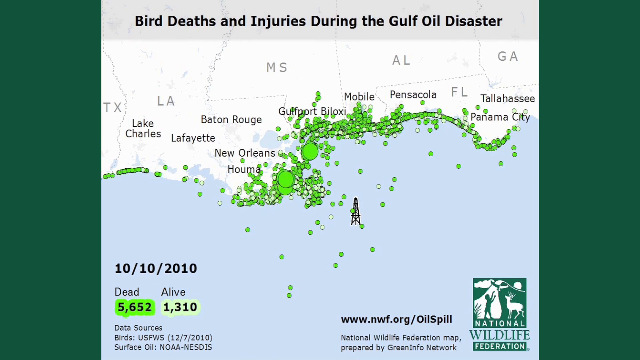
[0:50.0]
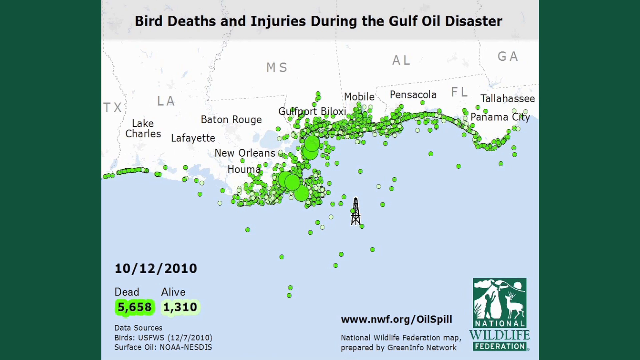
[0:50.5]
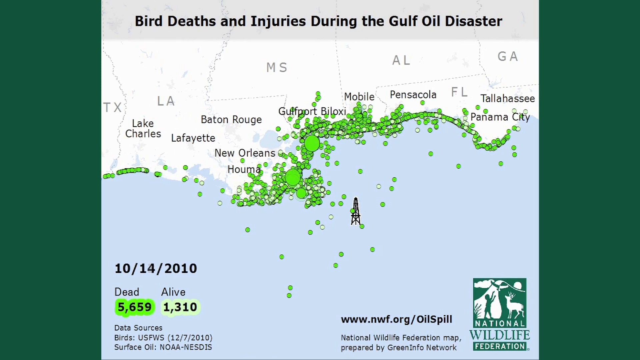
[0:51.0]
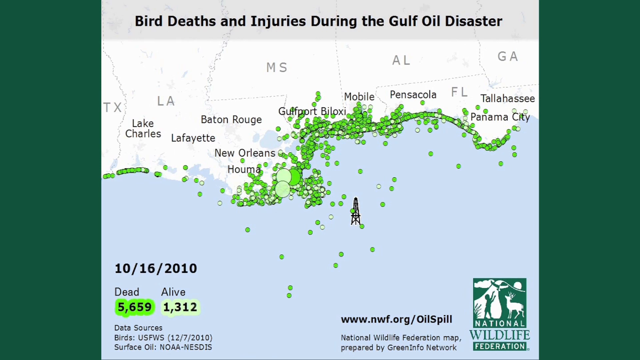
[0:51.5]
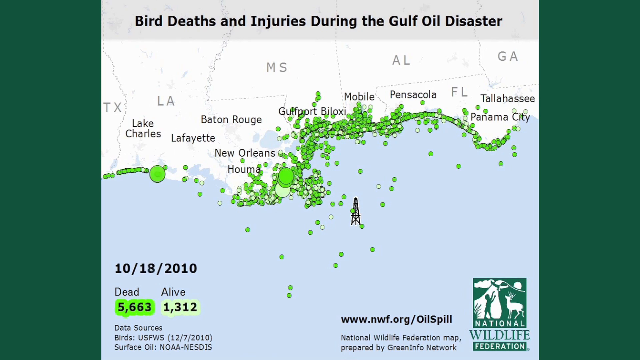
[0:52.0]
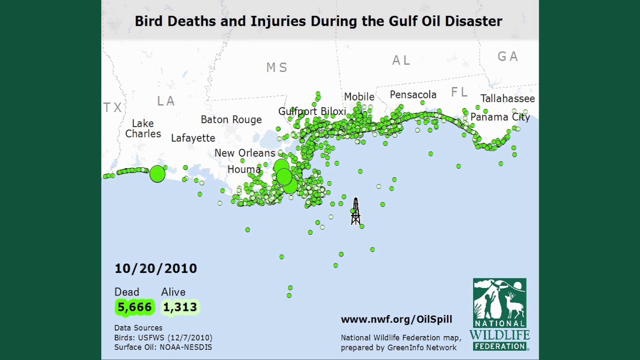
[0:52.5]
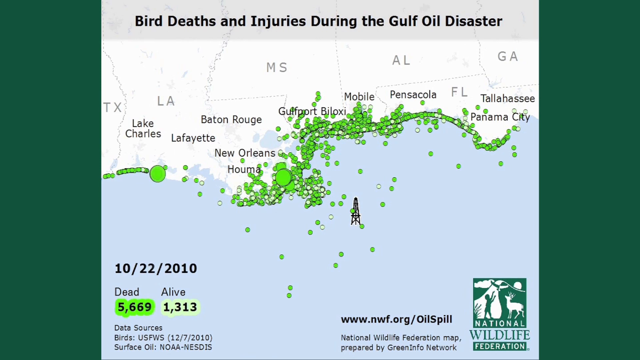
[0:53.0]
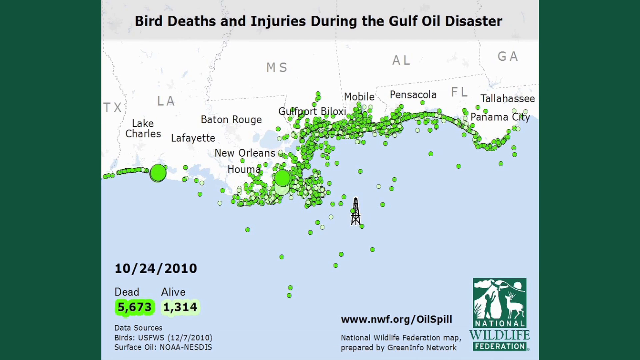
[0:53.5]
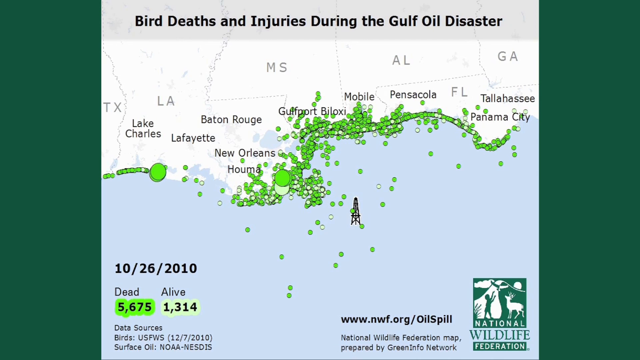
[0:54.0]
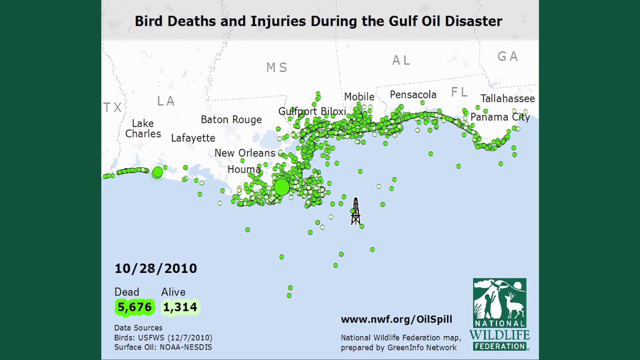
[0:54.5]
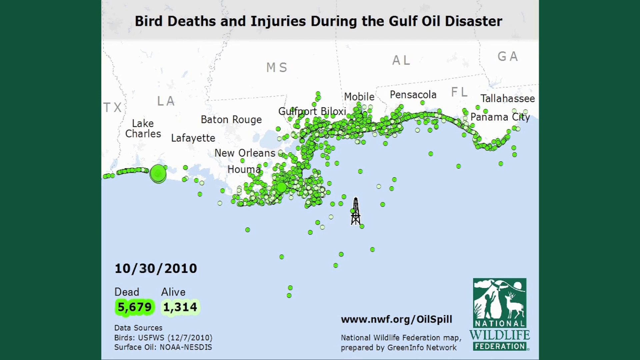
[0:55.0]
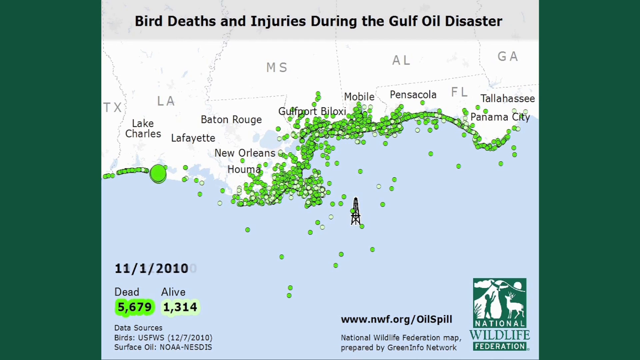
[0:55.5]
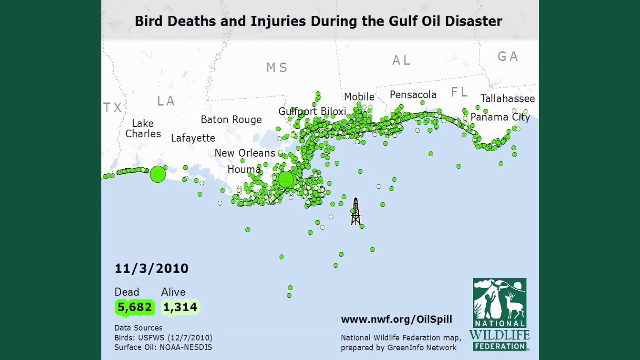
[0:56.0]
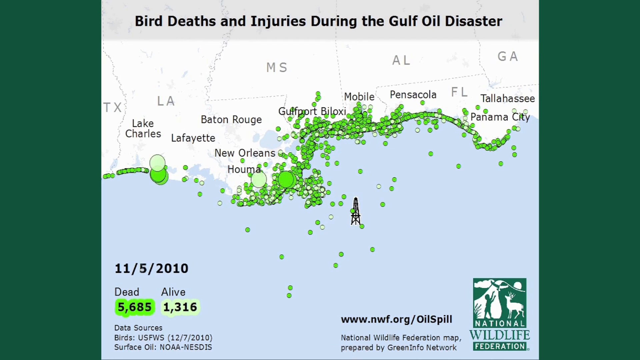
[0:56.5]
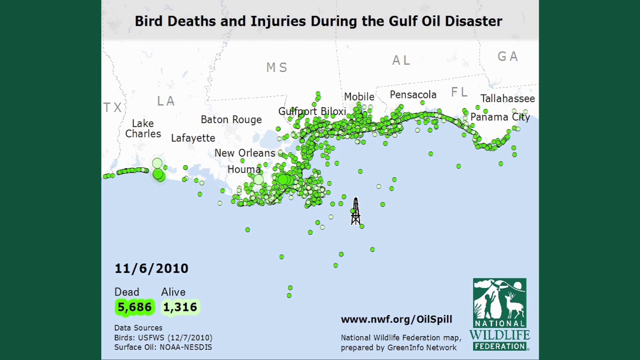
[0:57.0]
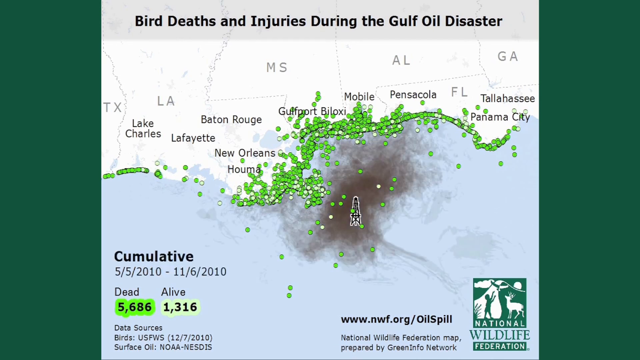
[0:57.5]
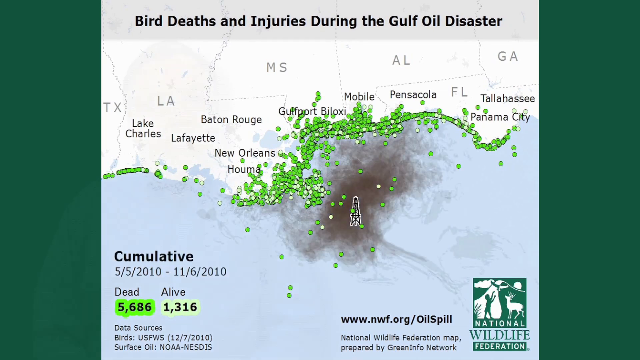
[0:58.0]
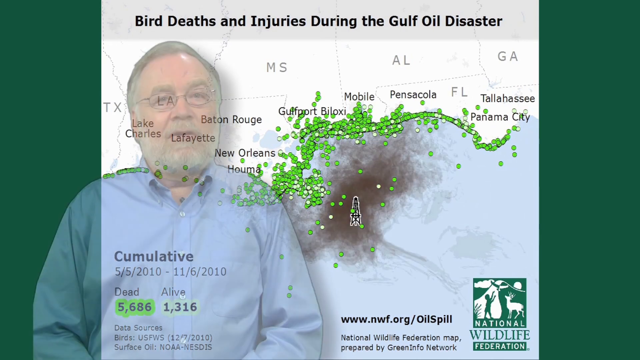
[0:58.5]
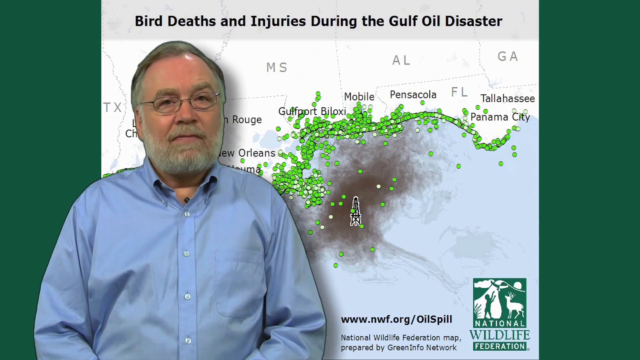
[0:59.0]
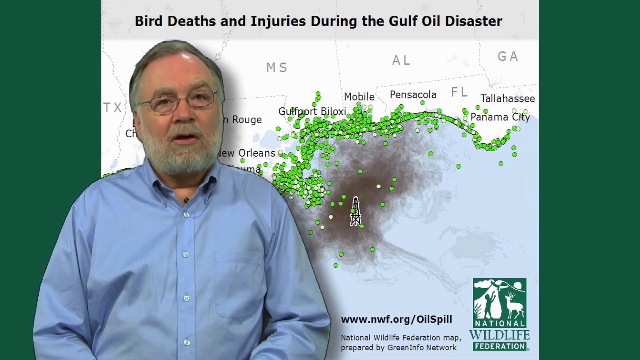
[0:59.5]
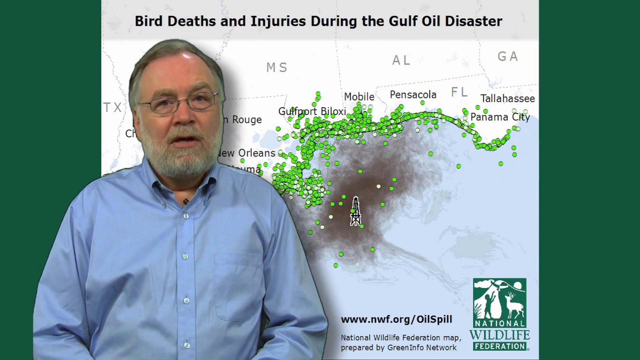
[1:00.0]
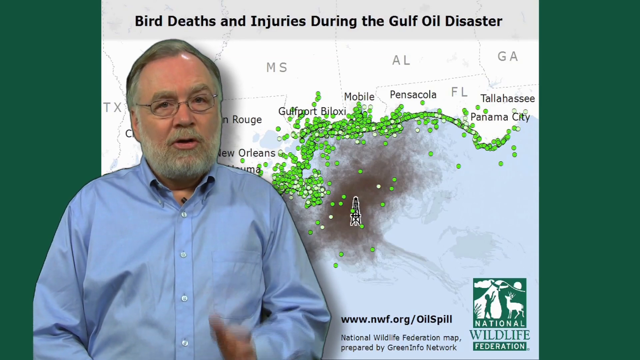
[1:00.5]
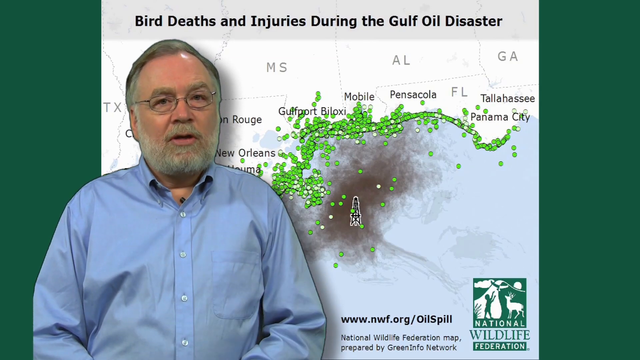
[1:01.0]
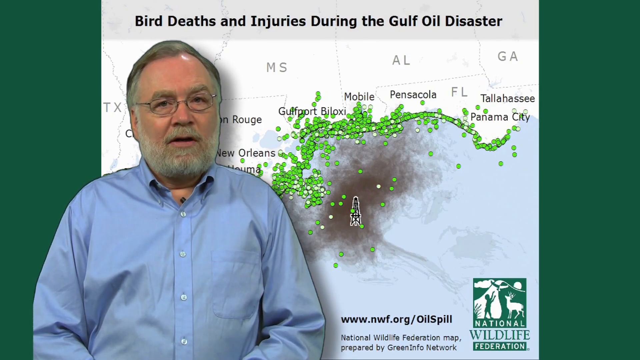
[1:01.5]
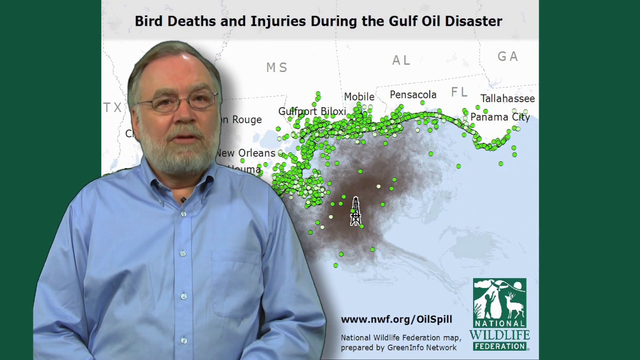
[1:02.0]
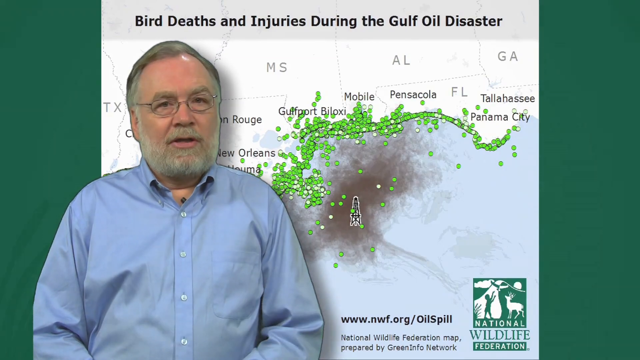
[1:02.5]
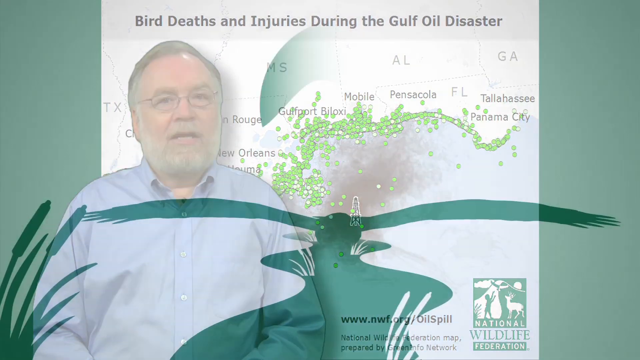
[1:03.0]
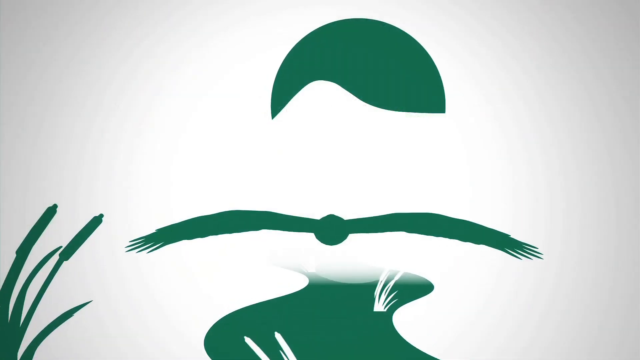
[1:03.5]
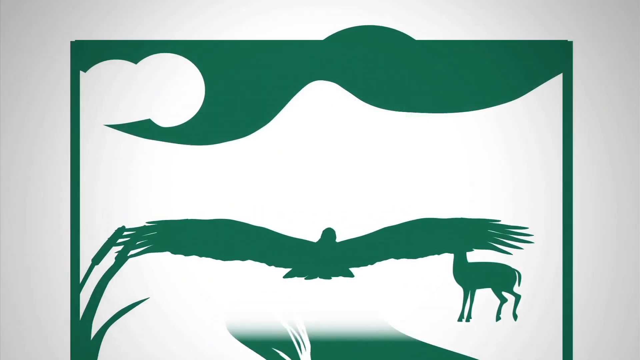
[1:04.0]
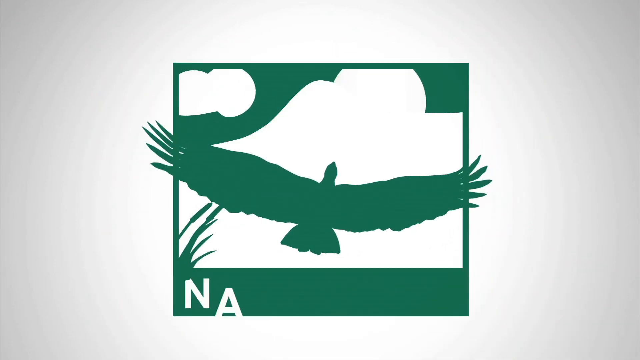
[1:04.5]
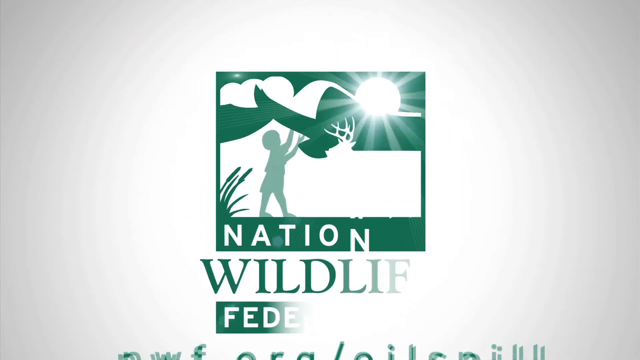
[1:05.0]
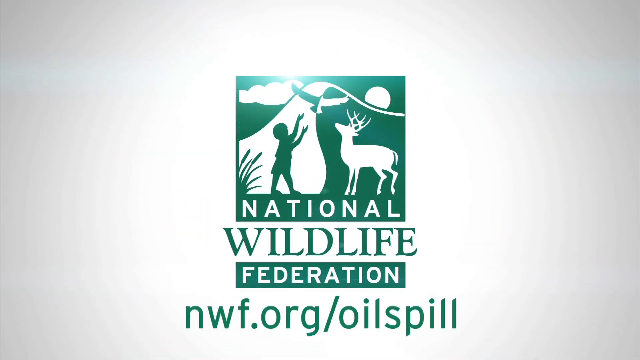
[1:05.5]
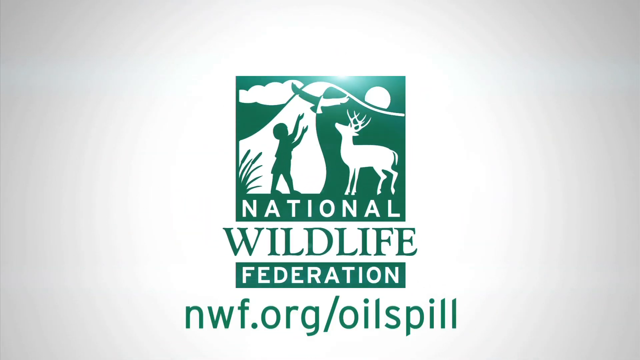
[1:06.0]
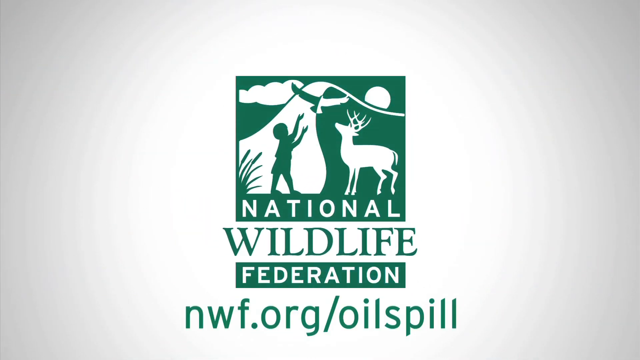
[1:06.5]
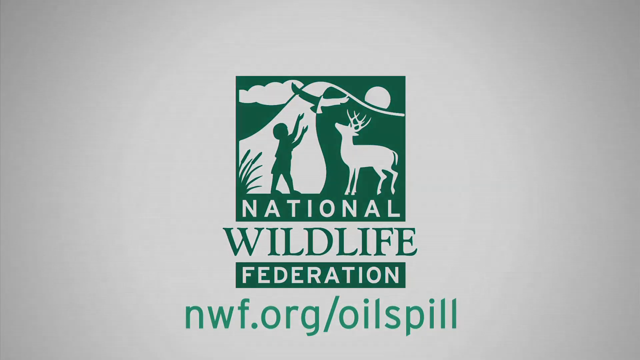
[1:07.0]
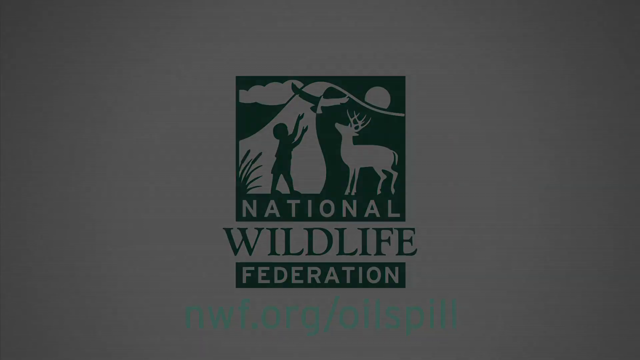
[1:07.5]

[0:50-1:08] What looks like a map of the south coast of America shows Texas, Louisiana, Missouri, Alabama, Florida and Georgia, with black text at the top reading "bird deaths and injuries during the Gulf oil disaster." In the center, there appears to be a black tower in the water, and many green and light green dots are scattered along the coast. In the bottom left the date reads "October 14th, 2010," with "dead" above 5,659 highlighted in green and "alive" with 1,310 highlighted in light green. The dates advance through October 15, 16, 17, 18 and onward into November as the numbers rise and the dots appear and disappear. Finally the bottom left reads "cumulative" with the dates "May 5th, 2010 to November 6th, 2010," and final counts of 5,686 dead and 1,316 alive. All the dots are now very small and cover the south coast, and black smudges are visible around the tower. A man suddenly phases in on the left side: he looks like a Caucasian man with a white beard and mustache, wearing glasses and a light blue shirt. He talks, raises his left hand a bit in a gesture, and keeps talking. An outro screen follows in which what looks like a green bird flies away from the viewer, transitioning into an icon of a green and white bird flying away from a child and an antelope. Text reads "National Wildlife Federation" and "nwf.org/oil spill" on a white background, and everything fades to black.